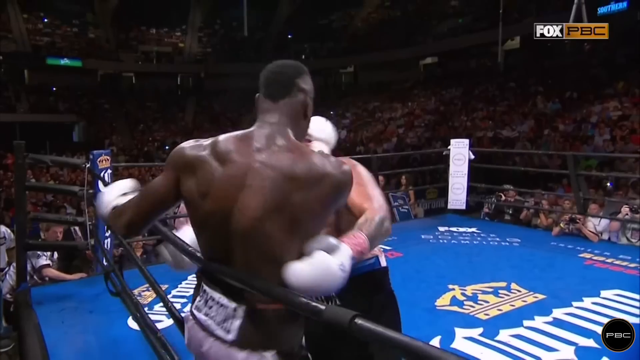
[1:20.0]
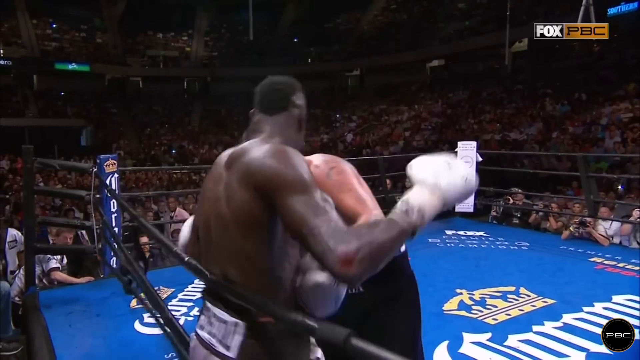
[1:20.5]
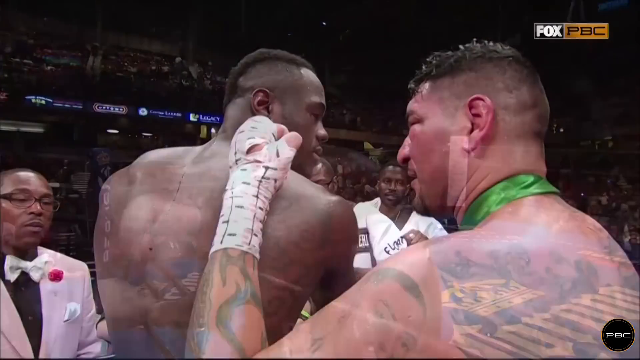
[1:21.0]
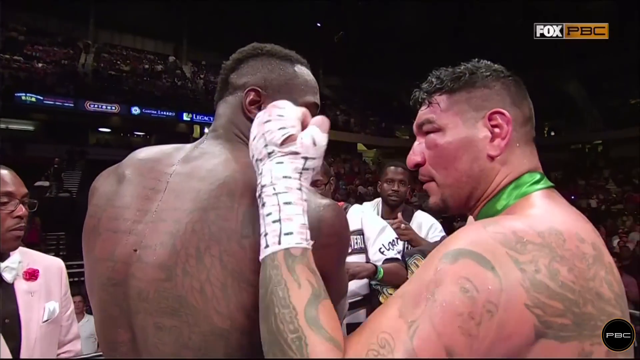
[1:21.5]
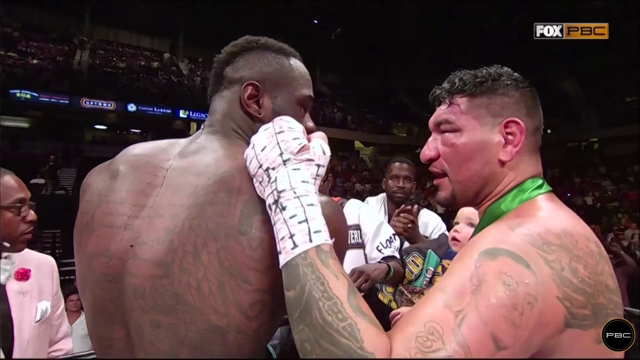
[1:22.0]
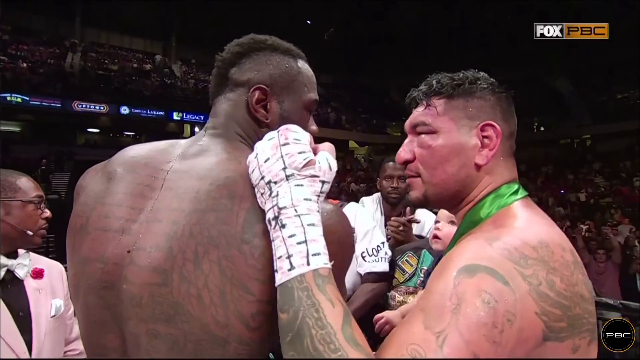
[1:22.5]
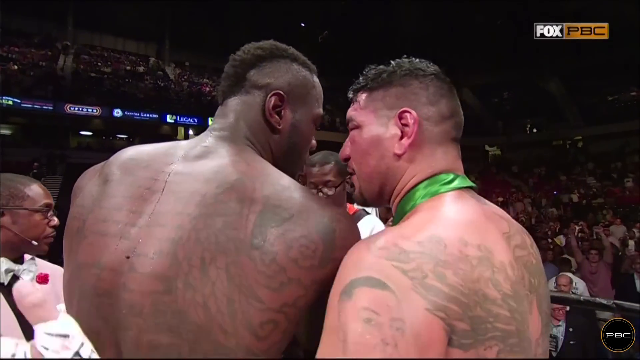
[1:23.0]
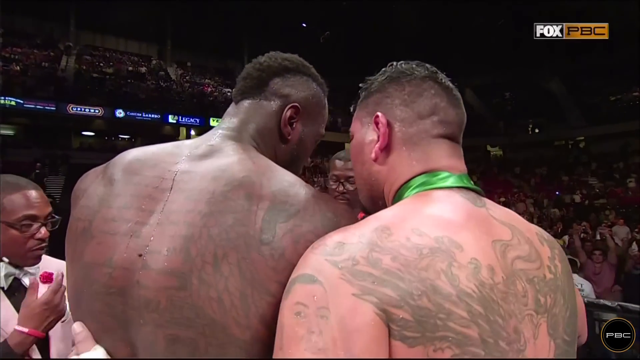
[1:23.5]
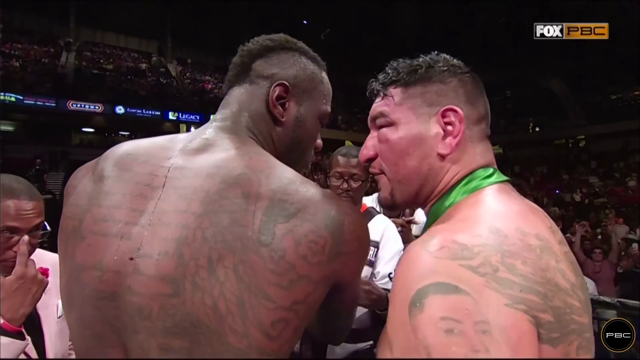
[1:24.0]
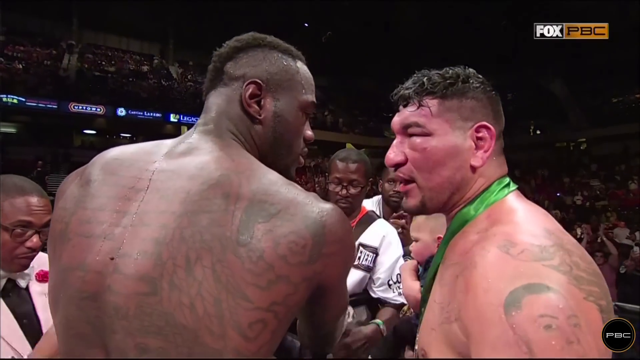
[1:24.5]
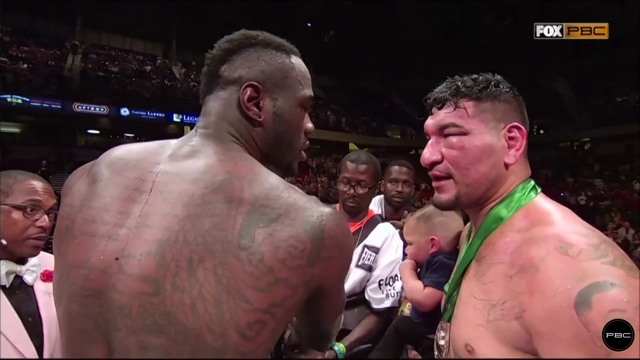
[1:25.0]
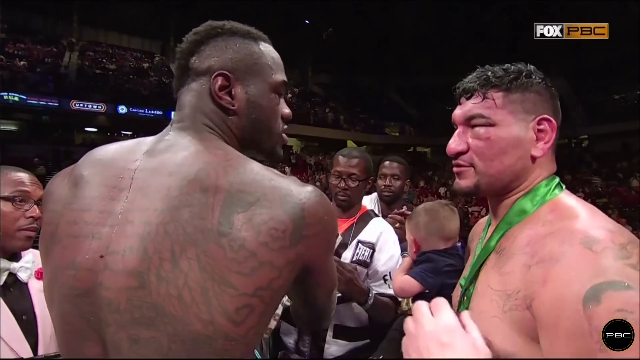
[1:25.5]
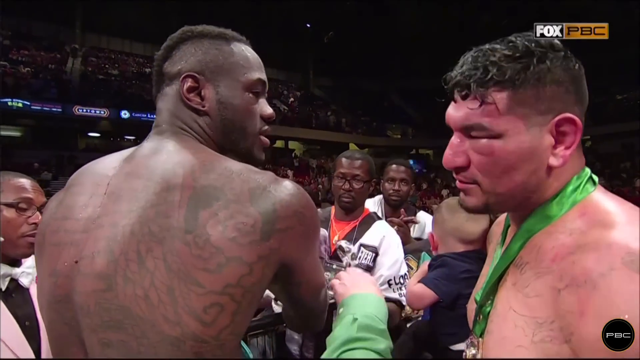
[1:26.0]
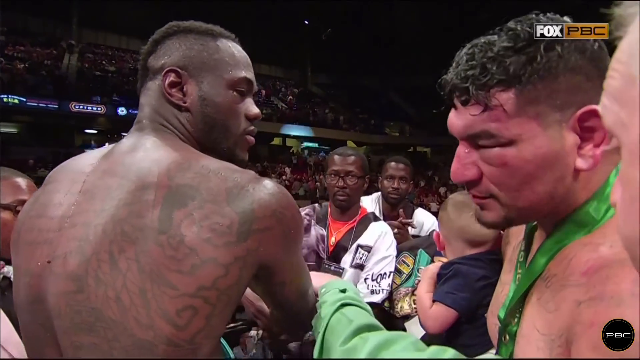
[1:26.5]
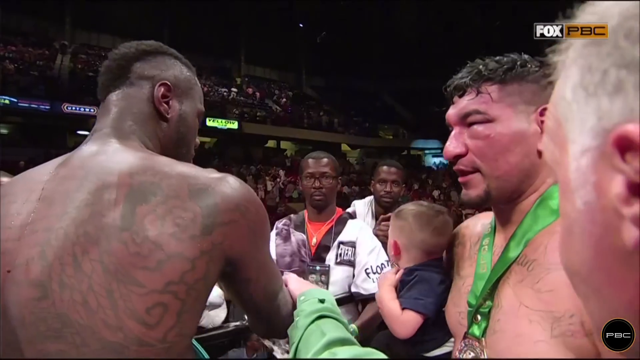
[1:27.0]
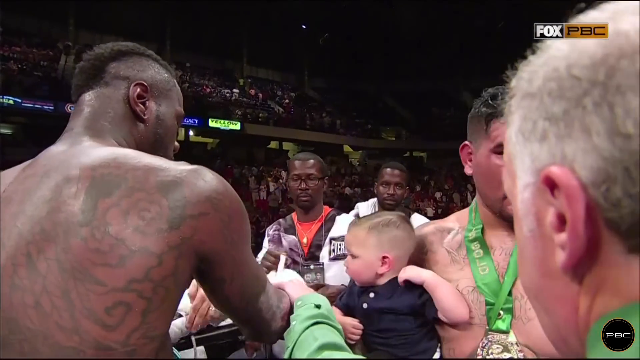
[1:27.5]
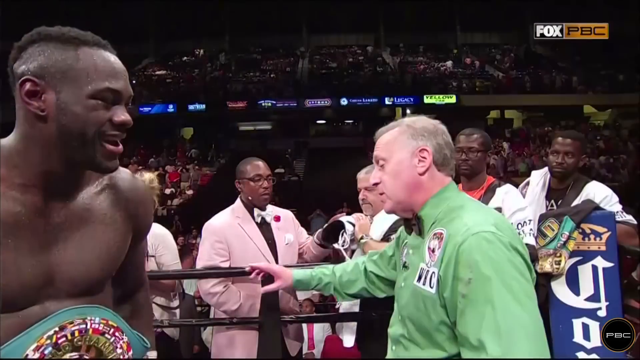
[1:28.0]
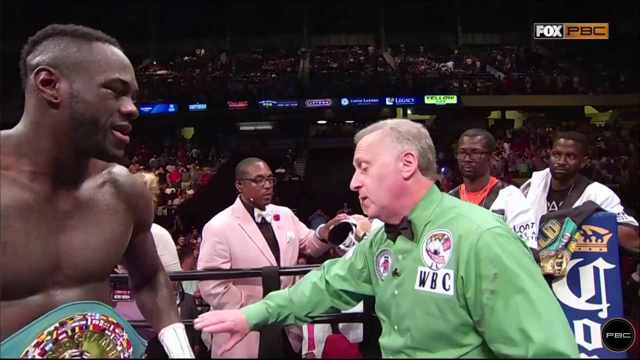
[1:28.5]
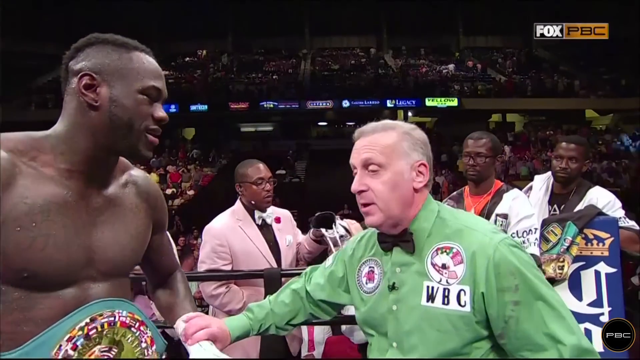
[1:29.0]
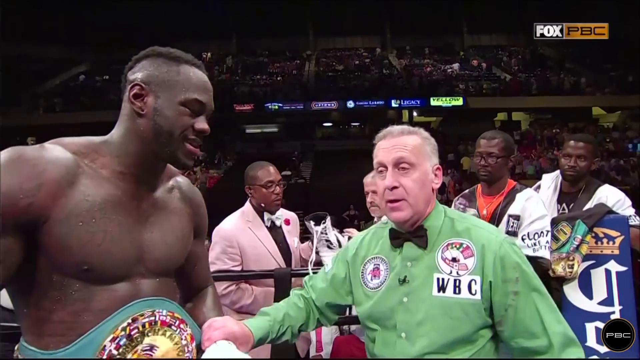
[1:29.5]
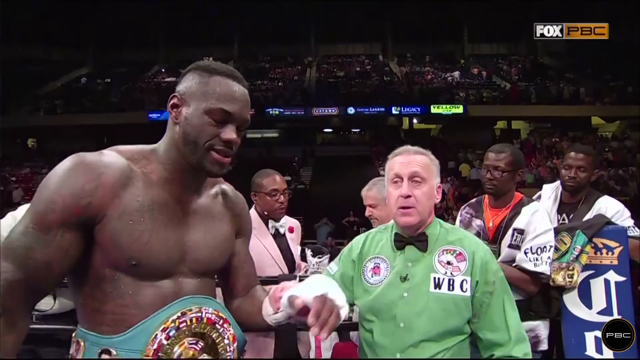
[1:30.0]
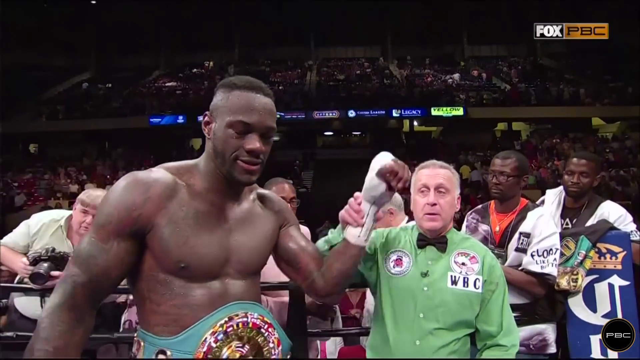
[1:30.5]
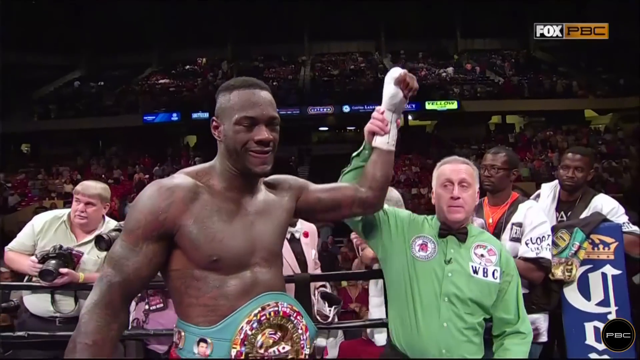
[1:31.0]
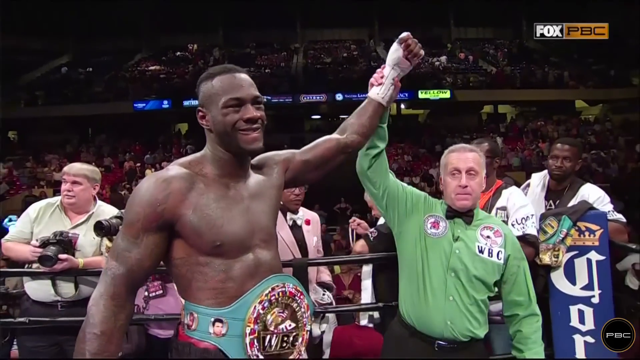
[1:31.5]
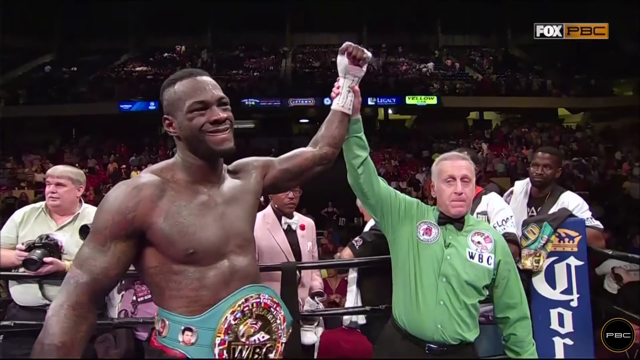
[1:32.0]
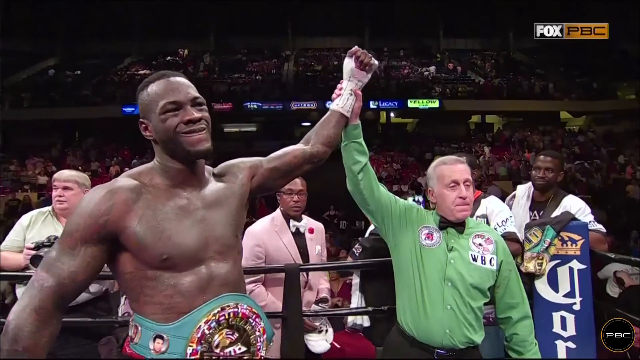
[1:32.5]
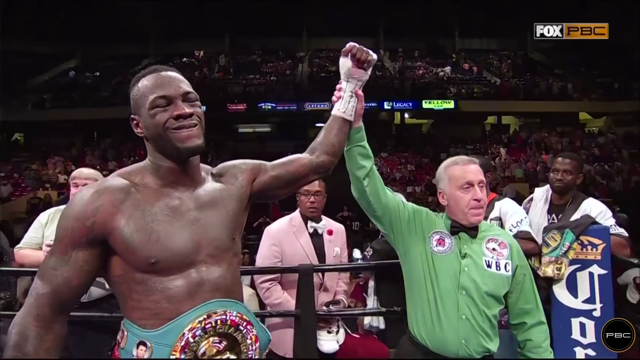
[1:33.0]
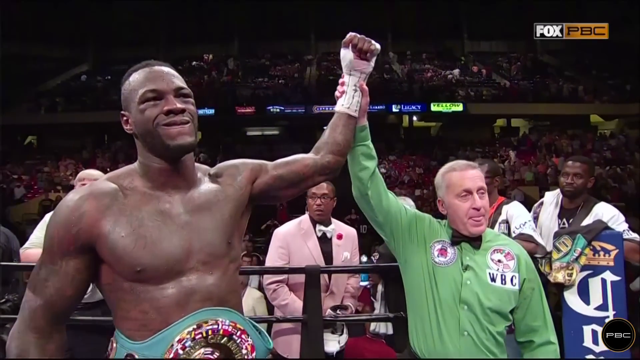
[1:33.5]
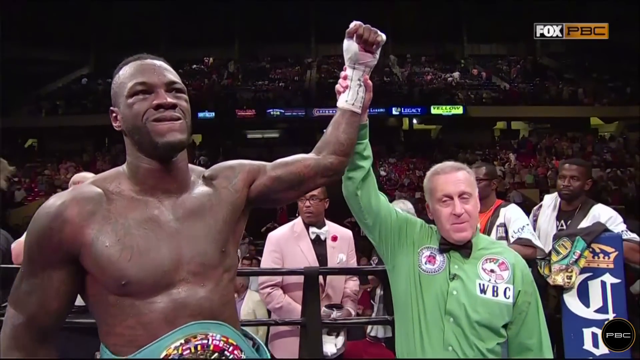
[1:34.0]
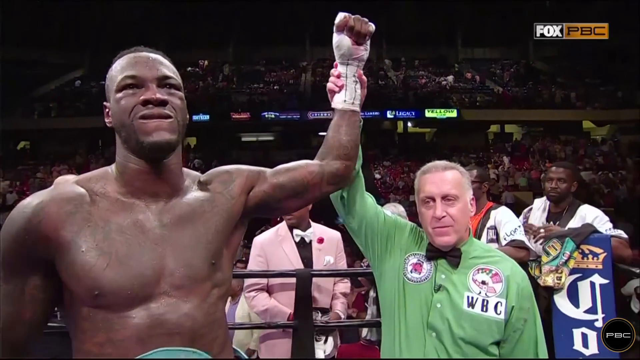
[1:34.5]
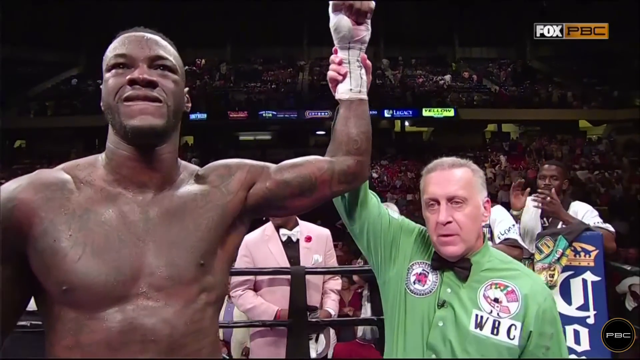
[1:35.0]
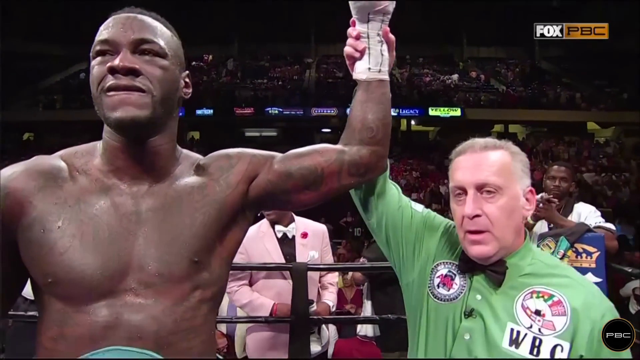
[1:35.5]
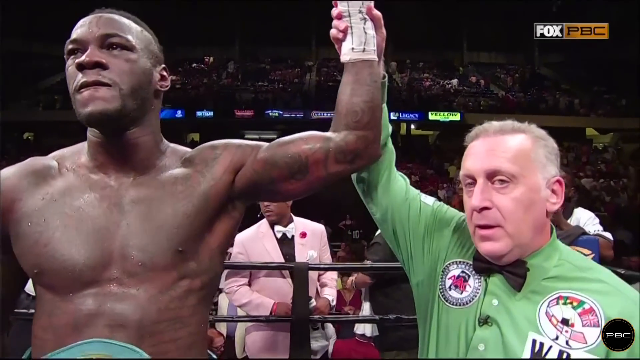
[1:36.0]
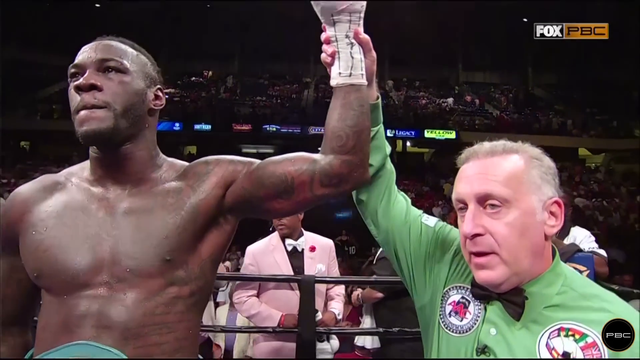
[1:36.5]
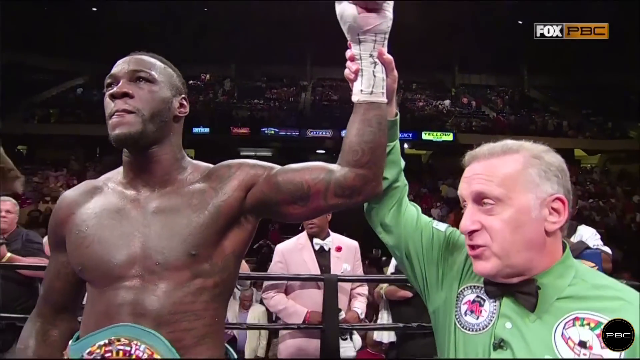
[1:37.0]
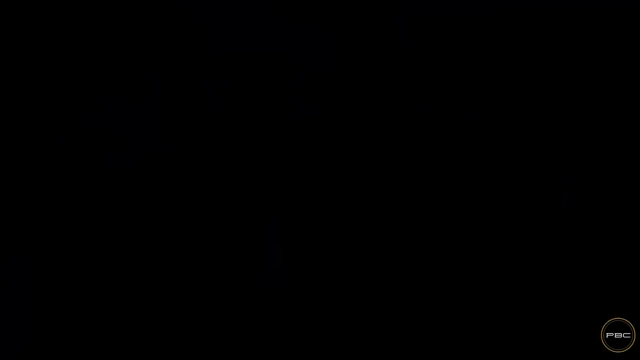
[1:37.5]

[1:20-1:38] After the match between Wilder and Areola, the umpire lifts the left arm of the African boxer as a sign of victory. The two opponents exchange pleasantries. The umpire wears a green button-up shirt and a black bow tie, with various emblems stitched on the shirt: one for the WBC and another badge with some sort of icon. The winner wears a large light blue leather belt with a golden disc in its centre, and the opponent wears a medal around his neck on a light blue ribbon. Everyone behind the winner in the audience and along the sidelines claps in congratulations.